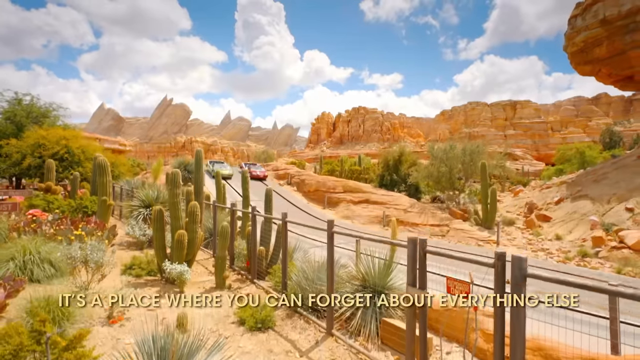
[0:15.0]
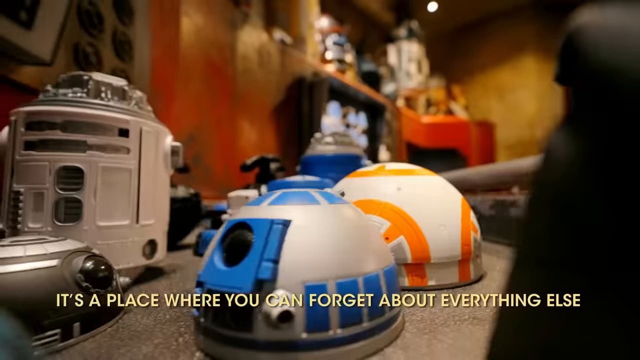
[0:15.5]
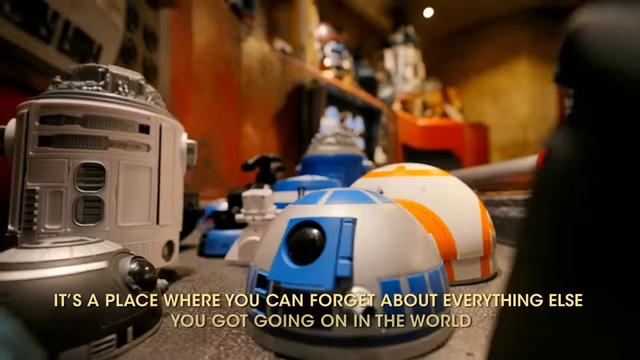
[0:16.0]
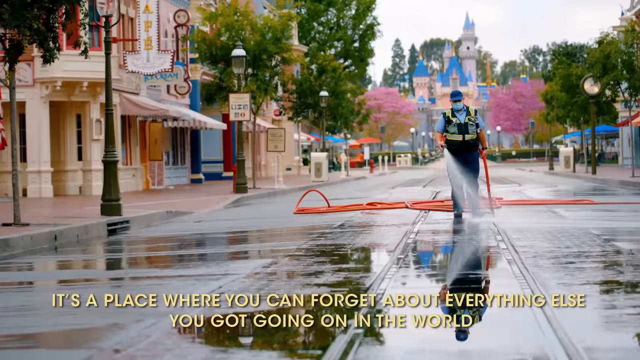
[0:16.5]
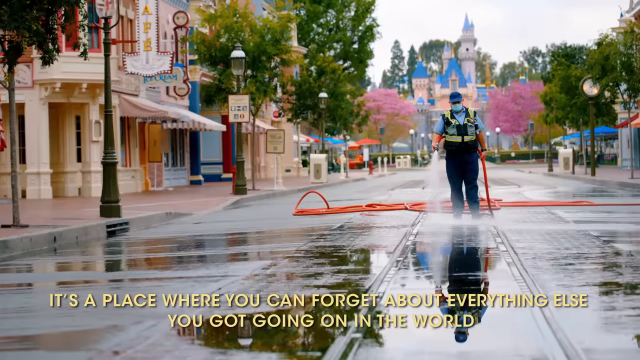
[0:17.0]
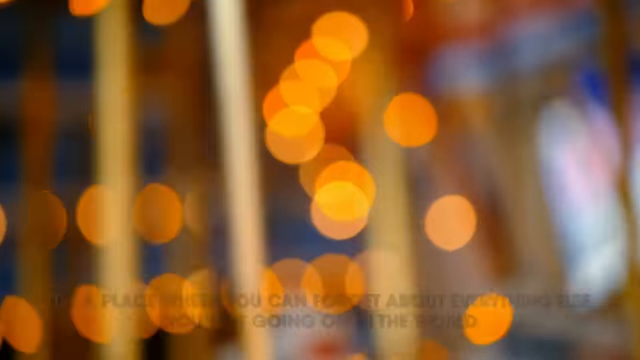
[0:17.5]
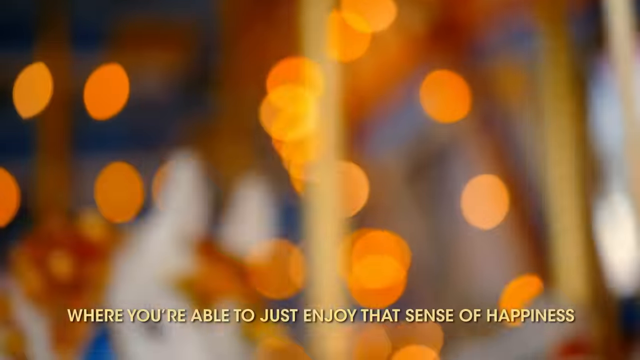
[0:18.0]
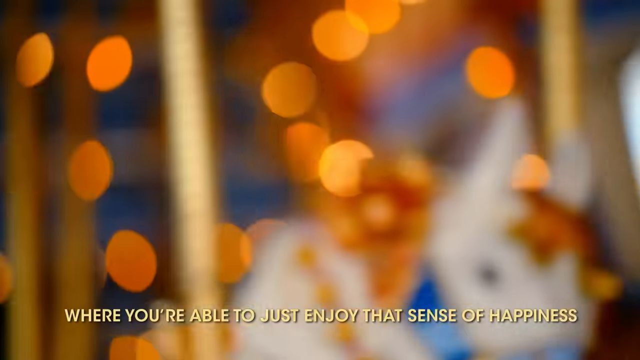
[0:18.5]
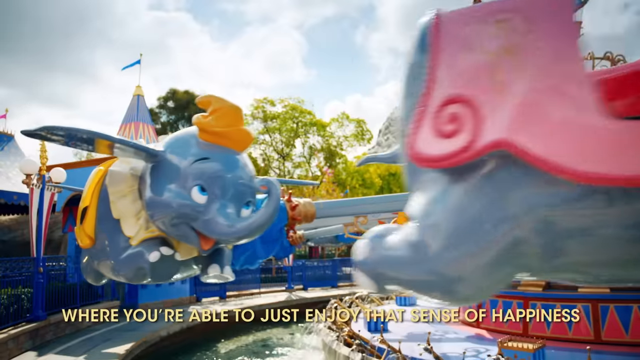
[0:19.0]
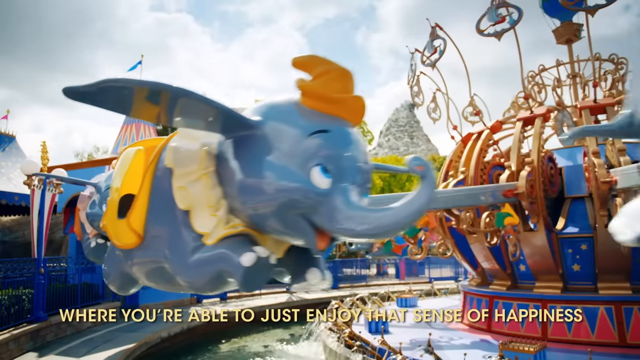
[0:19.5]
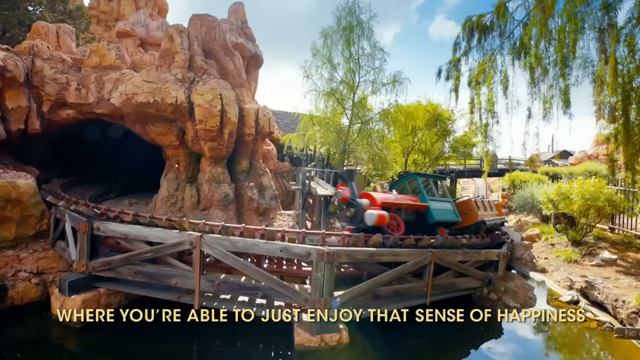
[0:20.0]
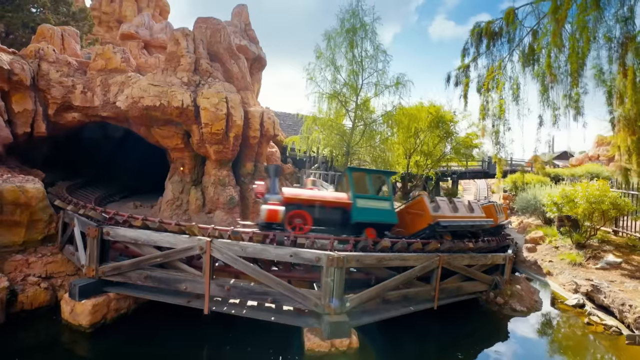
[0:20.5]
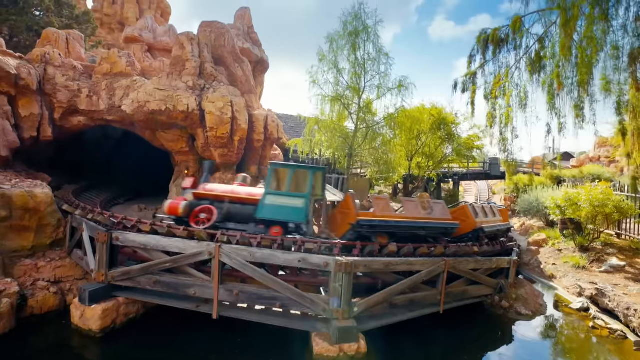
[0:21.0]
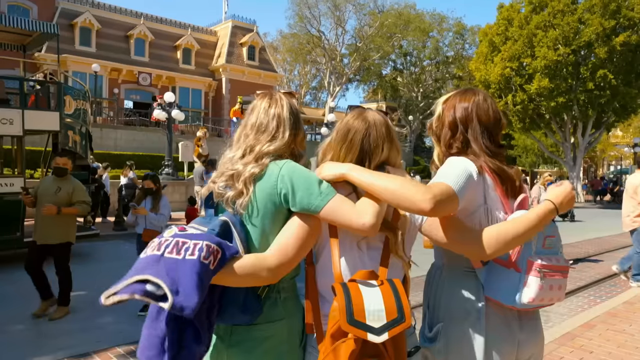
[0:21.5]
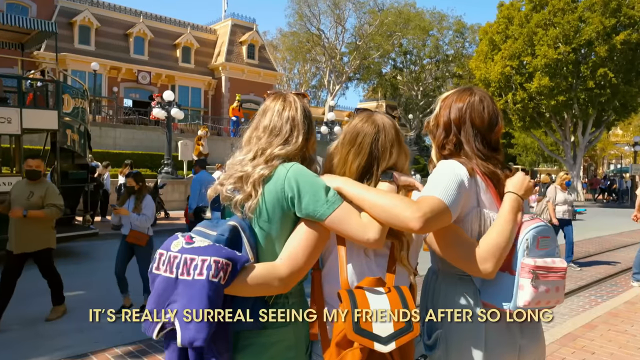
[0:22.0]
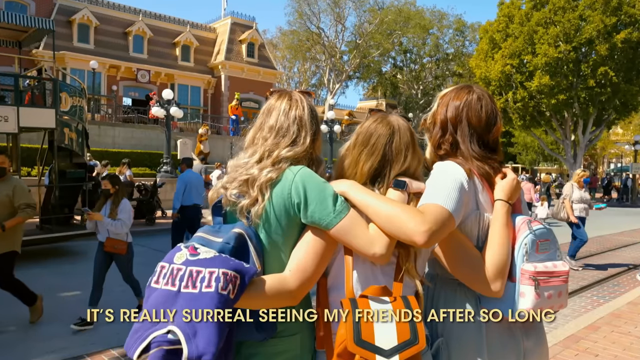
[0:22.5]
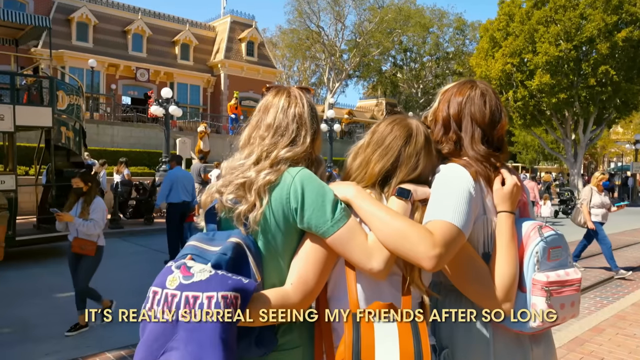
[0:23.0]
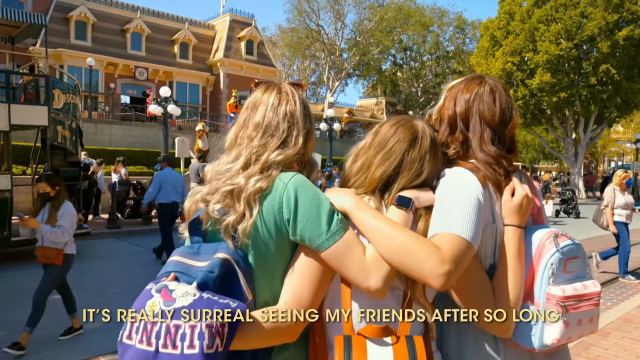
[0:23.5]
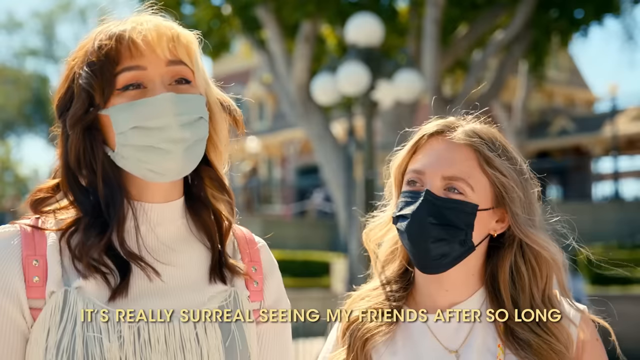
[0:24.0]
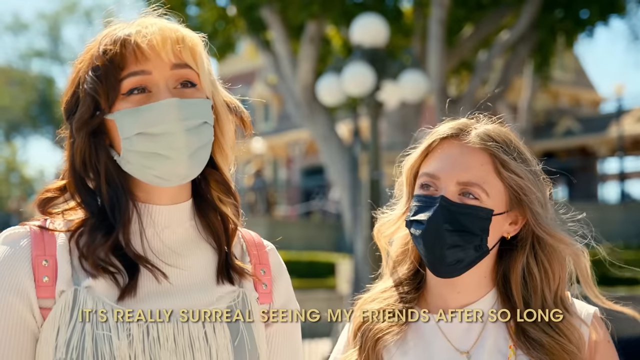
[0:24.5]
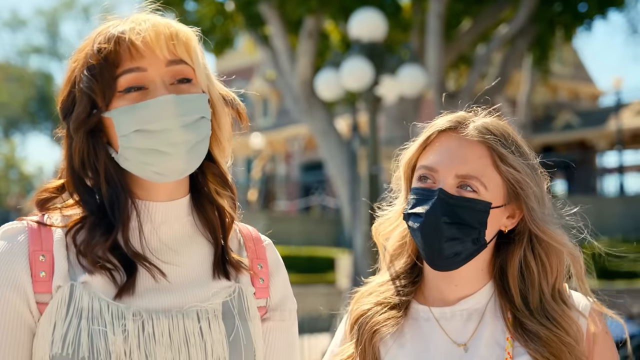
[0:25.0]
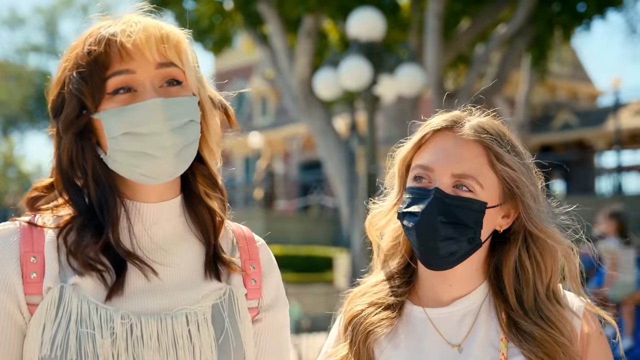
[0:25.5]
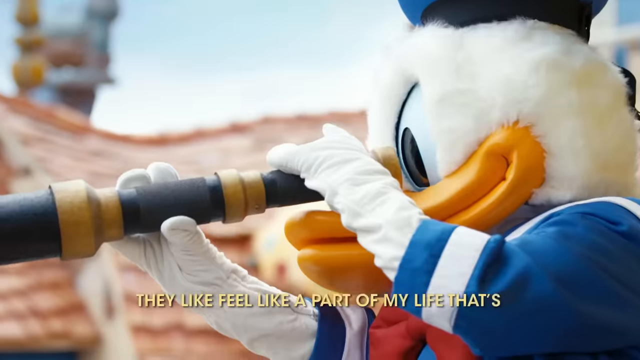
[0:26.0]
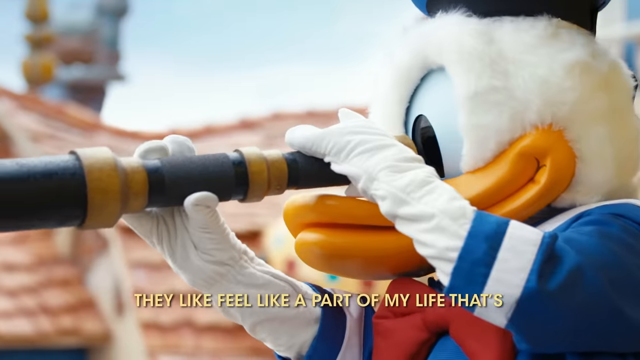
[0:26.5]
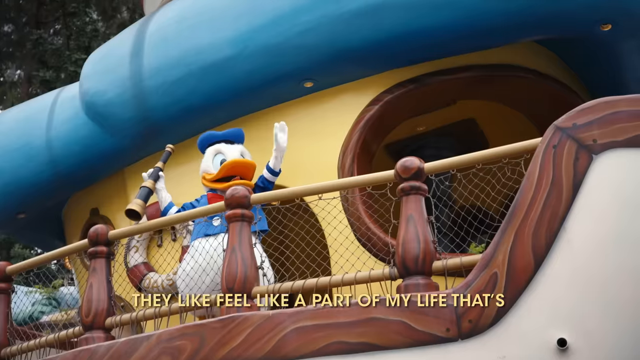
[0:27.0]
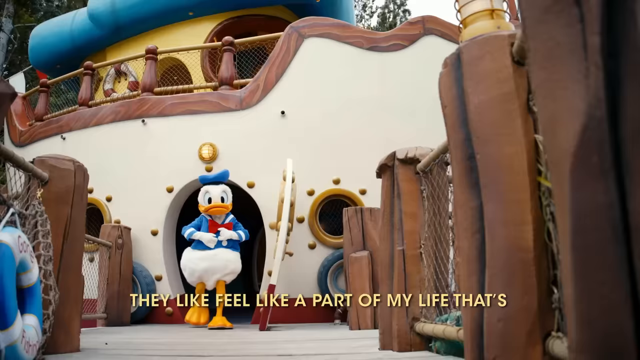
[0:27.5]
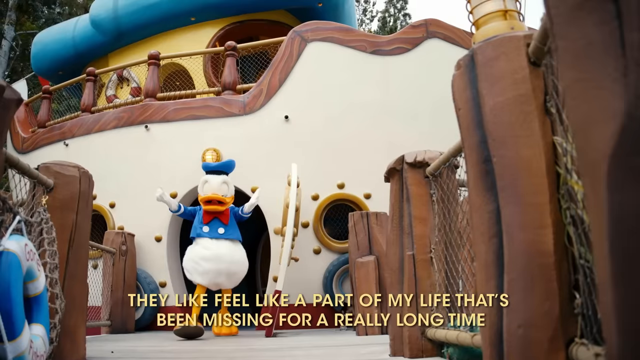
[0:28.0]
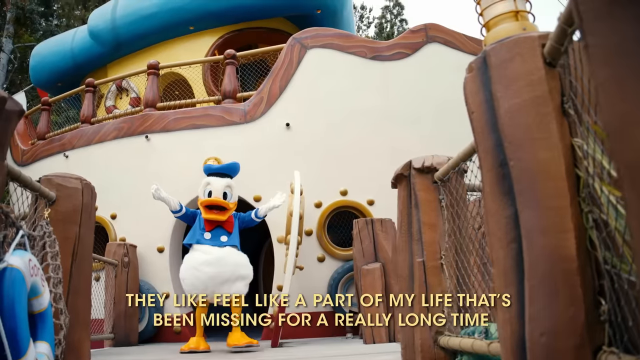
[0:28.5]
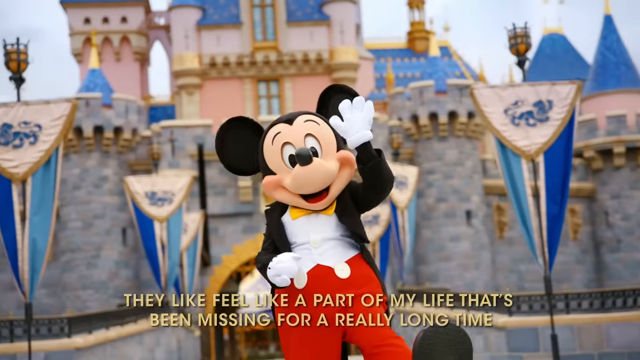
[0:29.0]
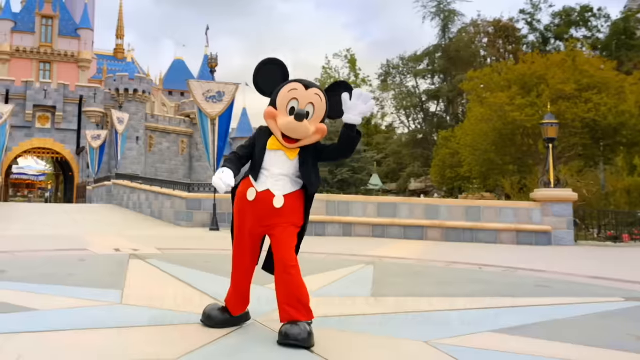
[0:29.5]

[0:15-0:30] The montage of images and very short clips of the park continues. First comes a ride with what appear to be racing cars out in a desert-looking area; the cars are unoccupied, so it looks like the park is mostly getting ready for visitors. Text appears, apparently a caption, reading "a place where you can forget about everything else," but it is not shown for long. After that ride, robots move around in some kind of ride, and a man who looks like a maintenance worker sprays down the walkways in the empty park. A carousel appears with text reading "where you're able to just enjoy." Another ride looks like a little baby roller coaster. Then three girls appear, the first visitors seen in the park. All wear masks and have backpacks, and they have their arms around each other as they take a picture. They seem to be having a good time, smiling and talking, possibly being interviewed about their experience. The section ends with the Mickey Mouse mascot character waving at the camera.